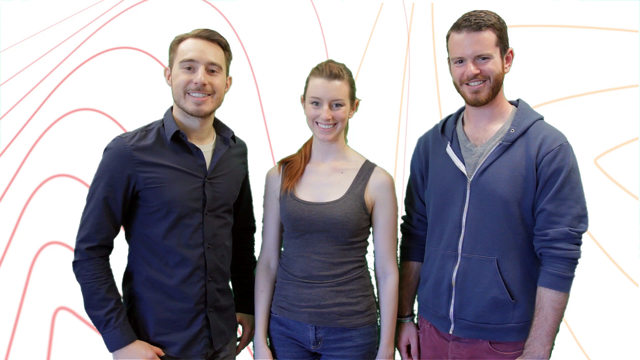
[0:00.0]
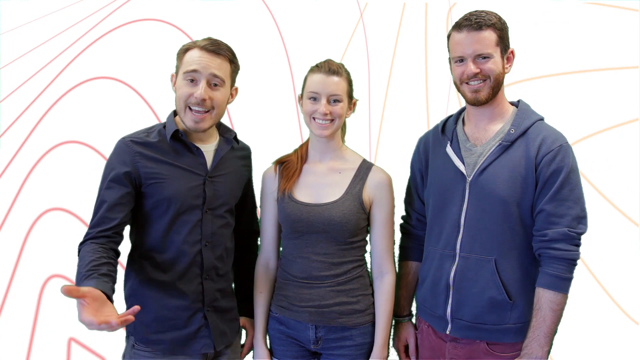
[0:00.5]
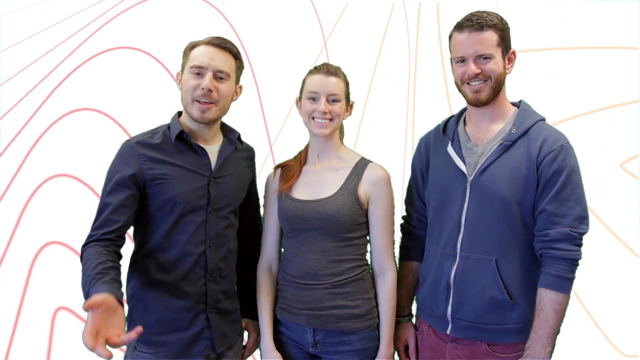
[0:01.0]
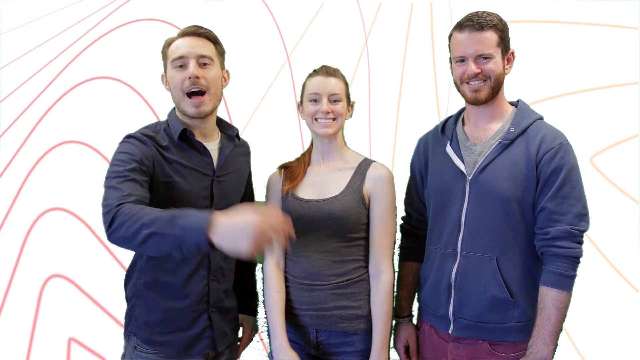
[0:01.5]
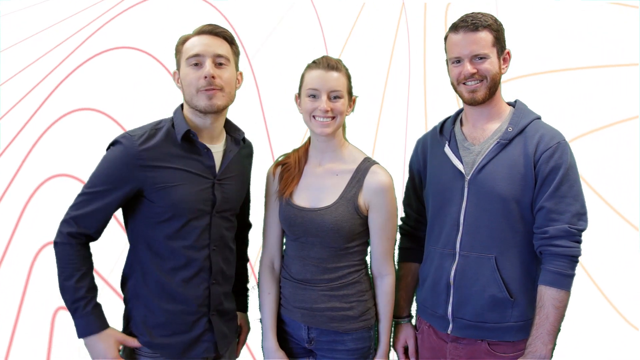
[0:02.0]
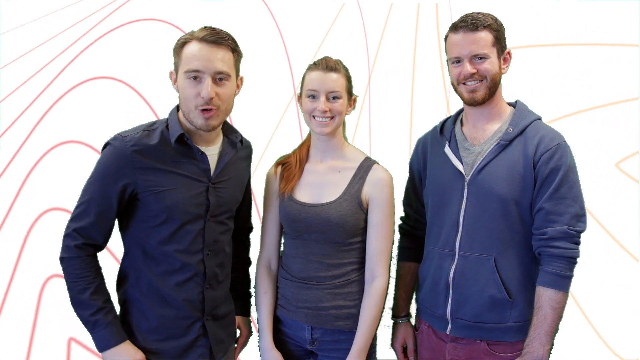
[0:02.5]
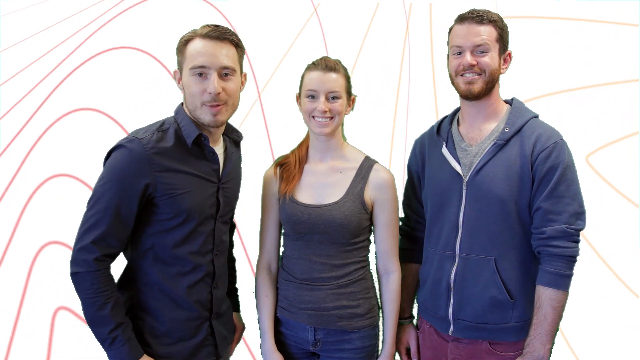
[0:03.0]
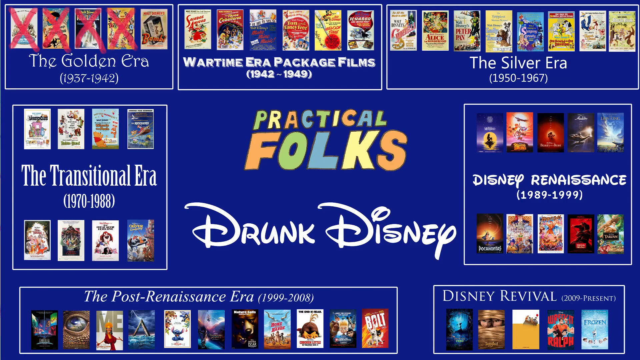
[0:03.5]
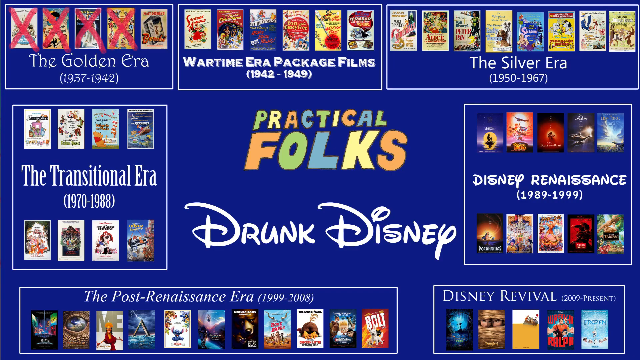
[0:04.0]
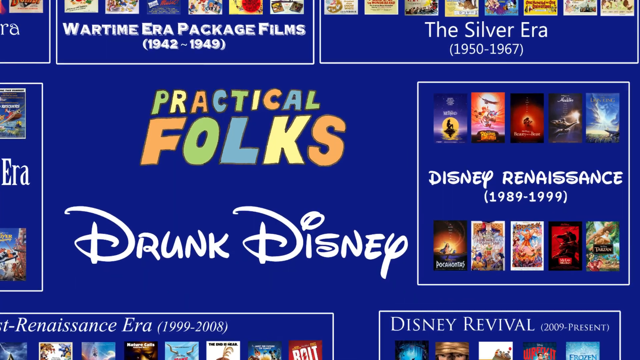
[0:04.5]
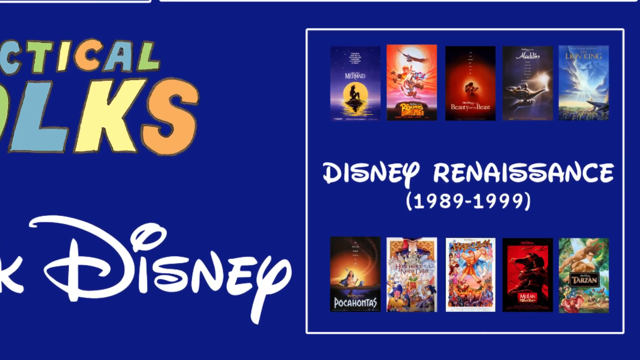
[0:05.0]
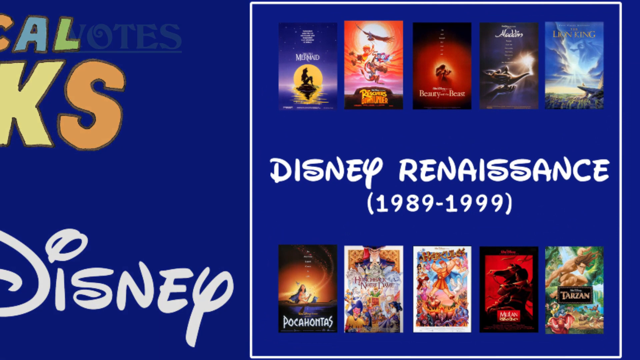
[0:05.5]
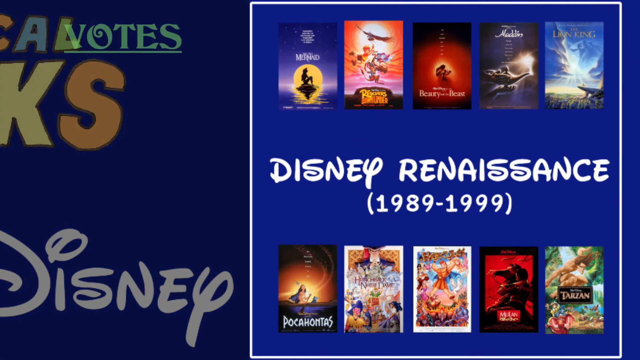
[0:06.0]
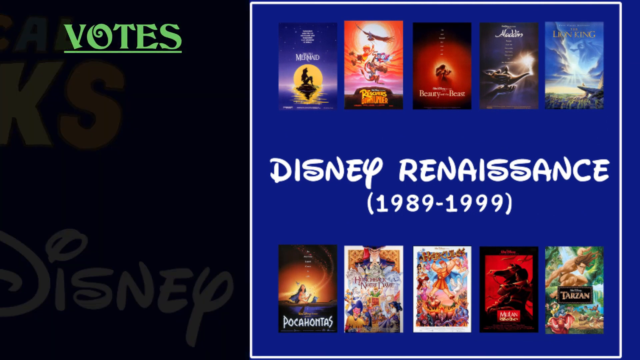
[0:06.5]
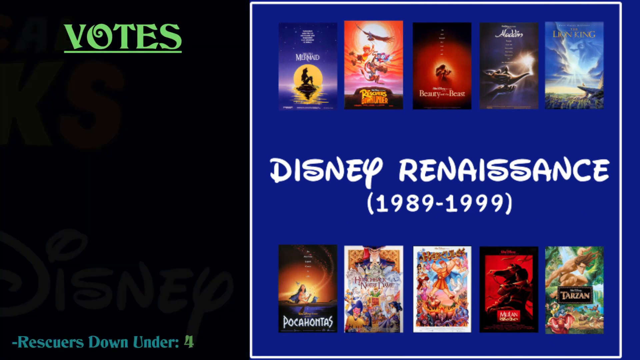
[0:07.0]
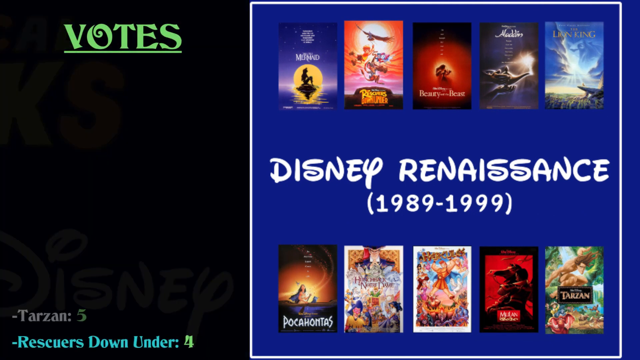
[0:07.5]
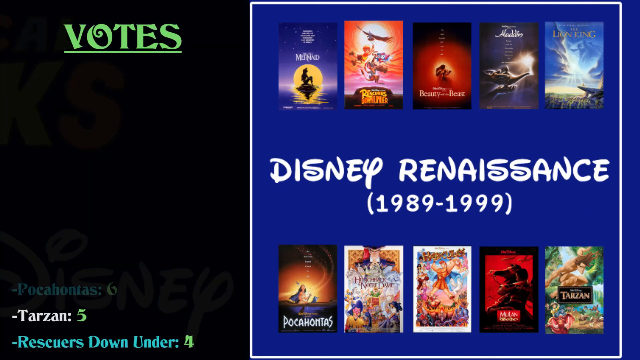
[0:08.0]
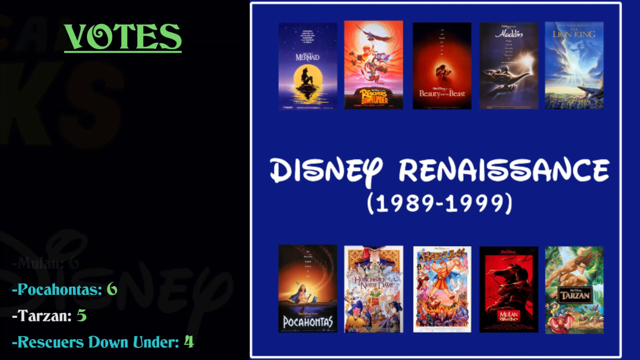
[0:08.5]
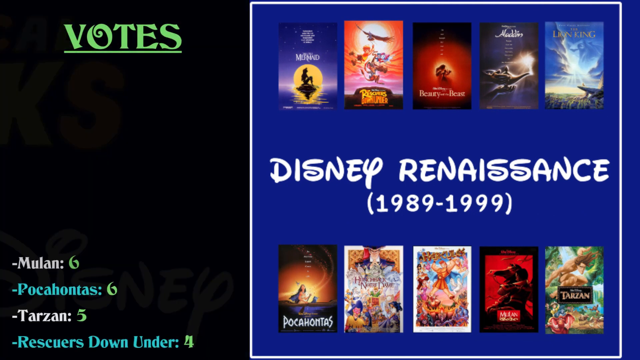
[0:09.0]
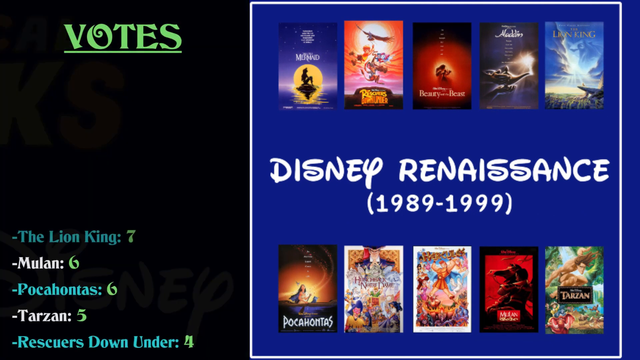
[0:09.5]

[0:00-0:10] Three people are on screen, two men and a woman, all smiling. The Disney Renaissance 1989 to 1999 board is visible. Both men have facial hair, dirty blonde hair, and seem somewhat clean-cut. One man wears a long-sleeve button-down shirt in dark blue or black; the other wears a jumper jacket with a hood. The woman wears a low-cut gray tank top and appears to be a redhead. The background is a kind of white backdrop with swervy lines going up and down and back and forth in all directions, a little indistinguishable.